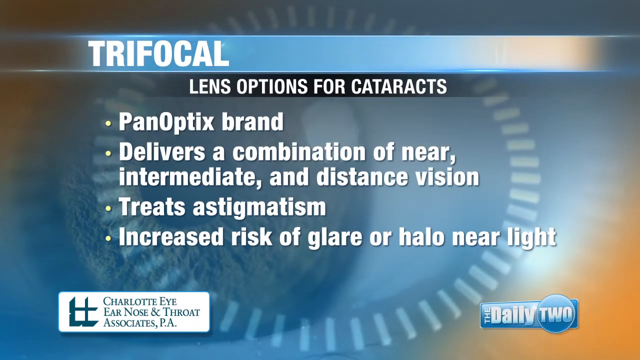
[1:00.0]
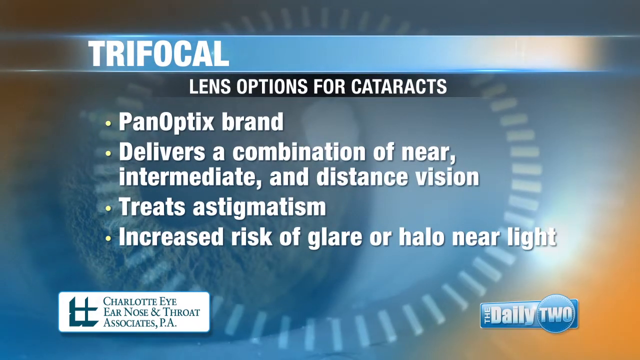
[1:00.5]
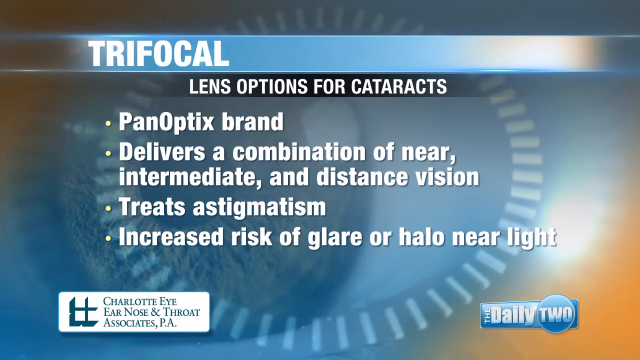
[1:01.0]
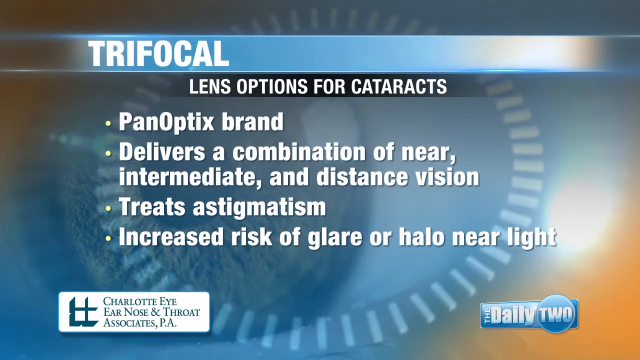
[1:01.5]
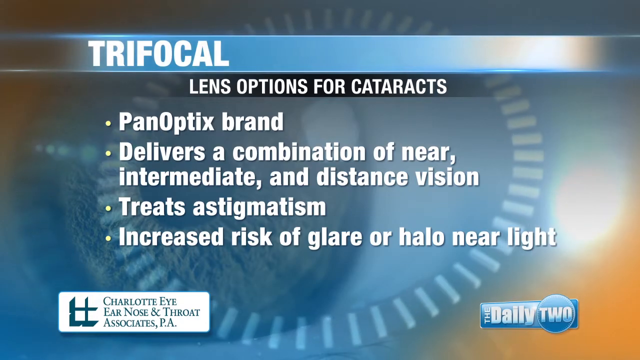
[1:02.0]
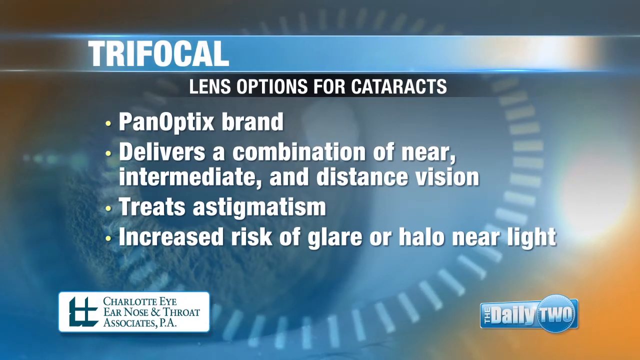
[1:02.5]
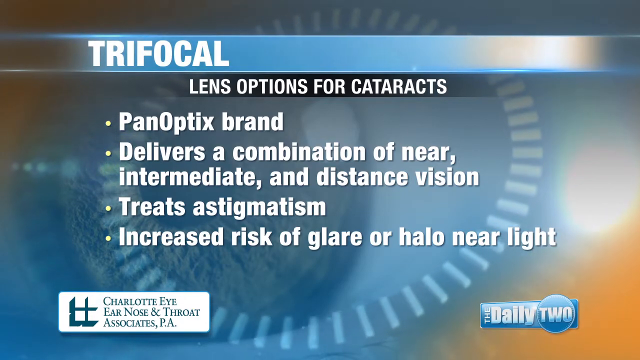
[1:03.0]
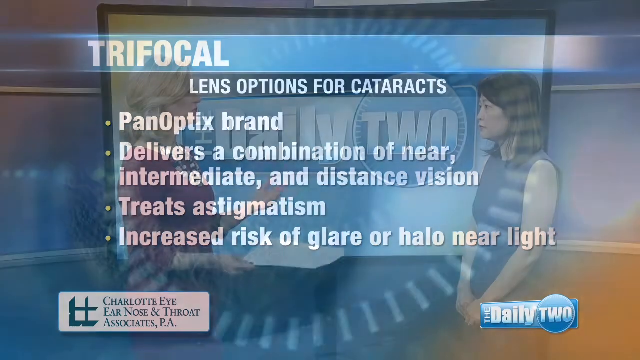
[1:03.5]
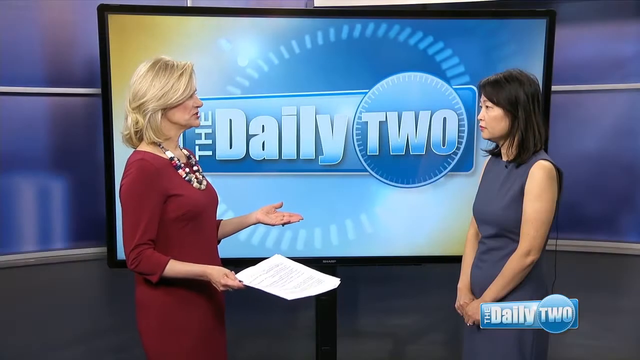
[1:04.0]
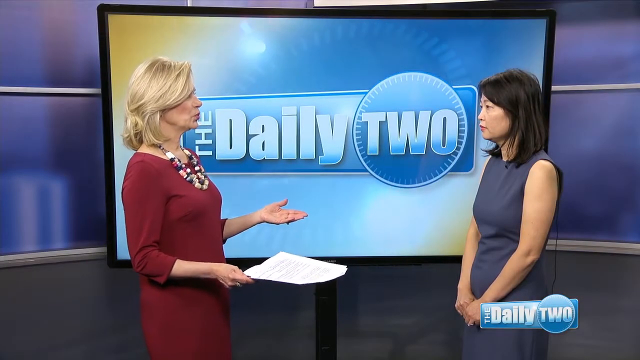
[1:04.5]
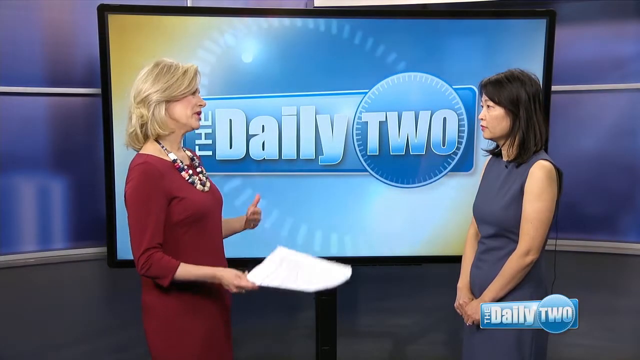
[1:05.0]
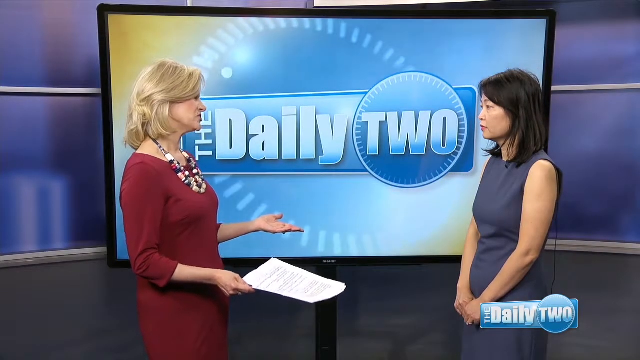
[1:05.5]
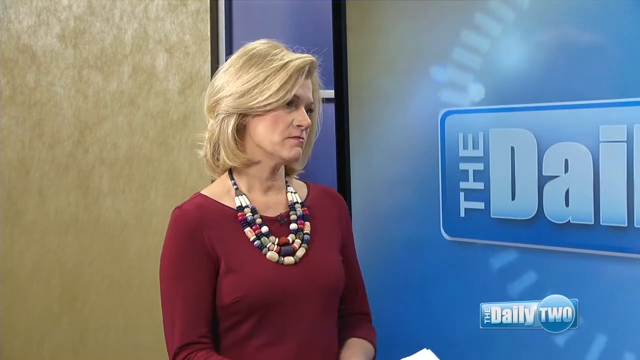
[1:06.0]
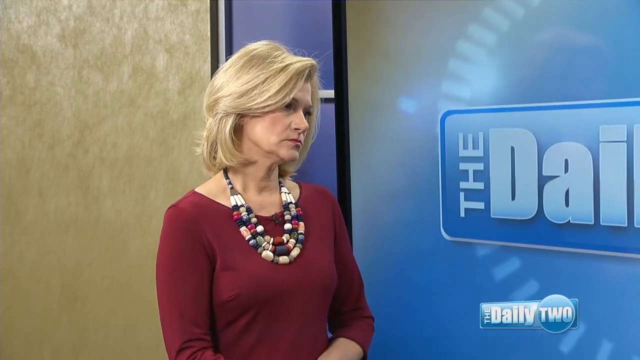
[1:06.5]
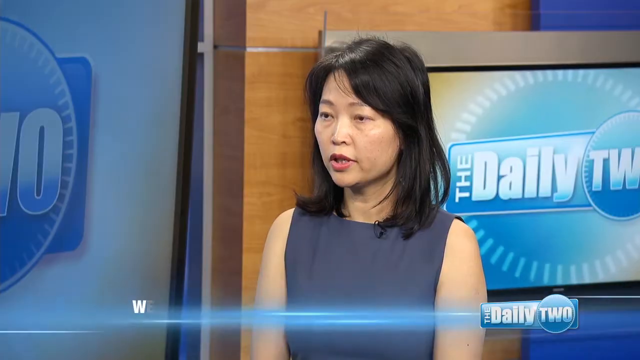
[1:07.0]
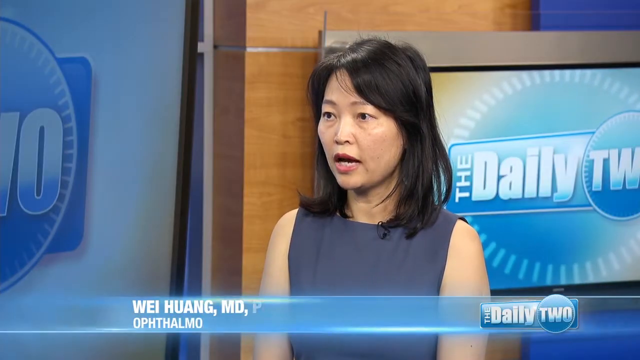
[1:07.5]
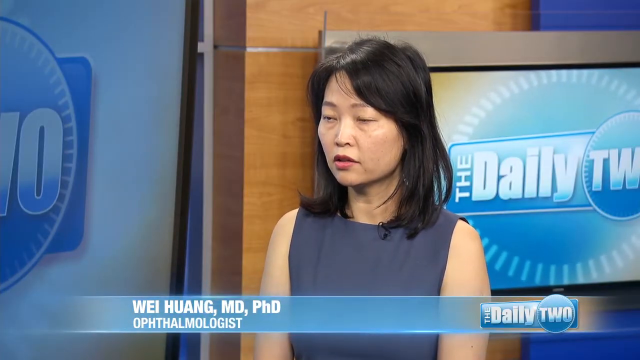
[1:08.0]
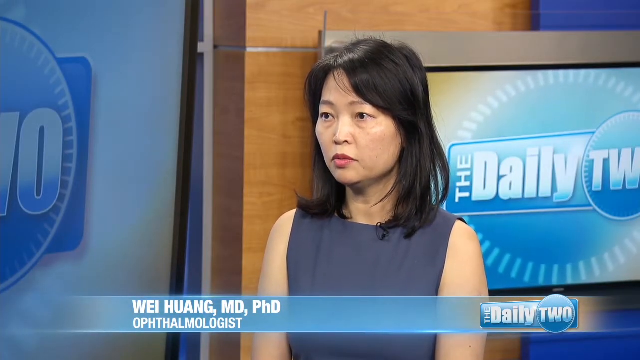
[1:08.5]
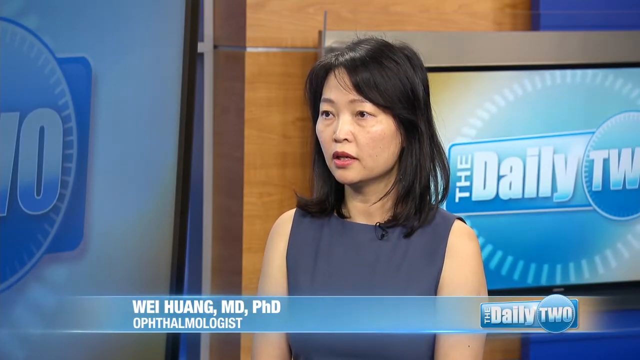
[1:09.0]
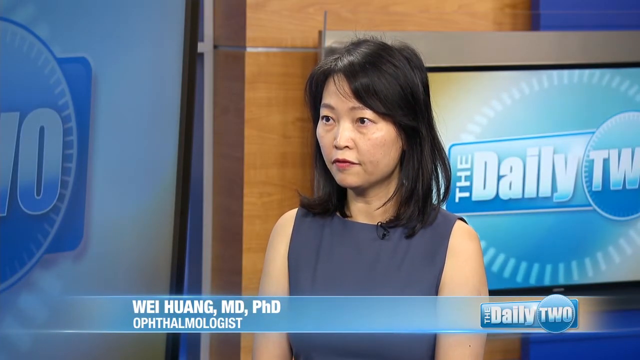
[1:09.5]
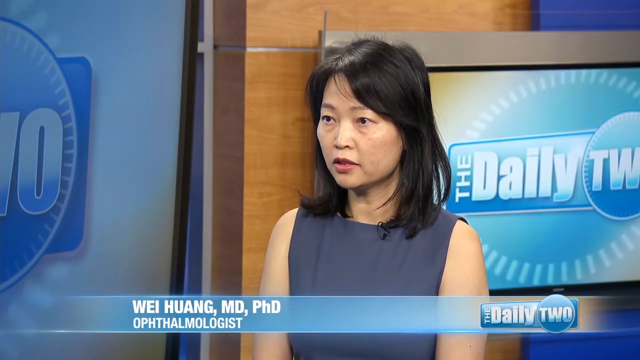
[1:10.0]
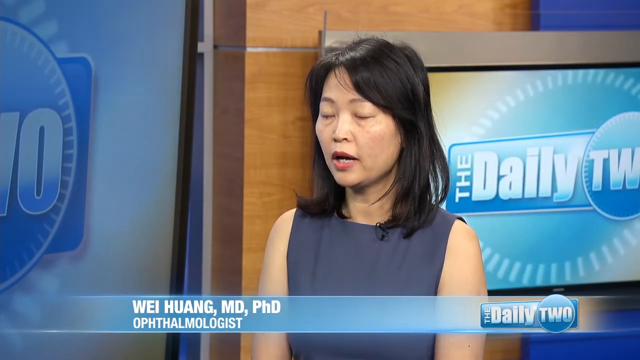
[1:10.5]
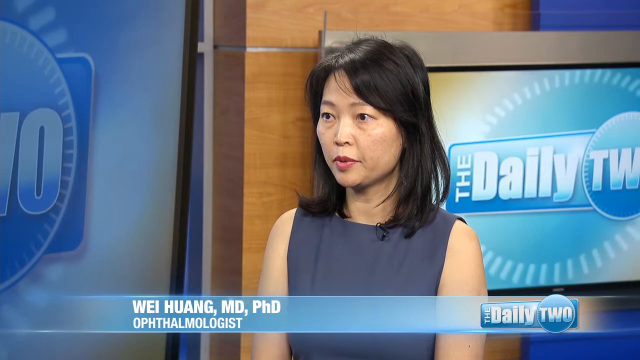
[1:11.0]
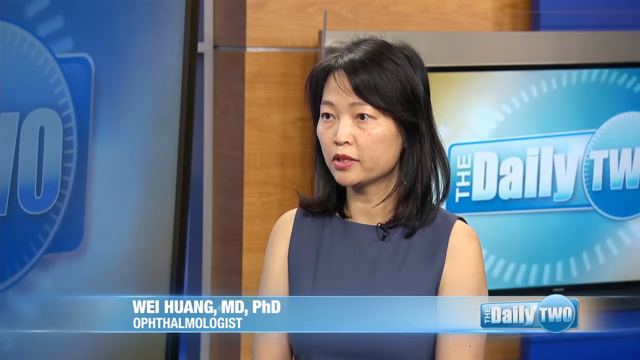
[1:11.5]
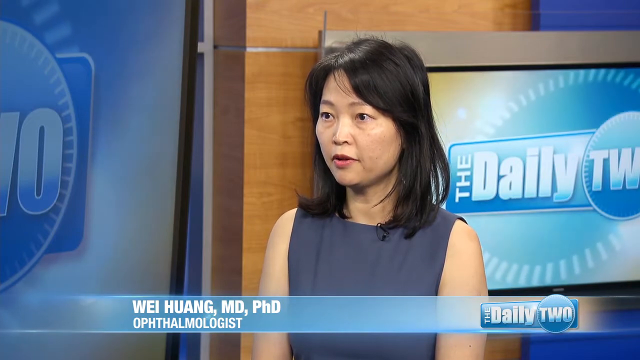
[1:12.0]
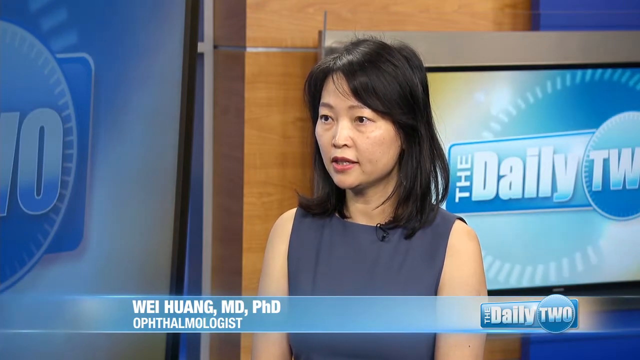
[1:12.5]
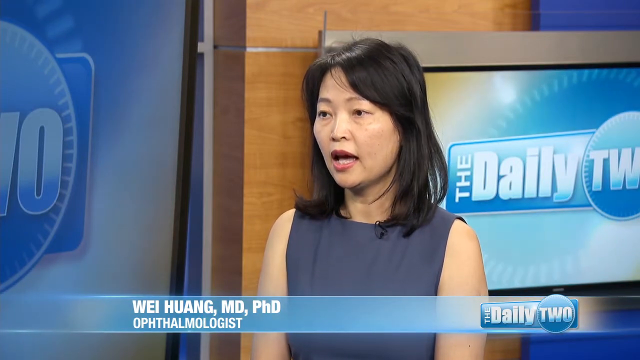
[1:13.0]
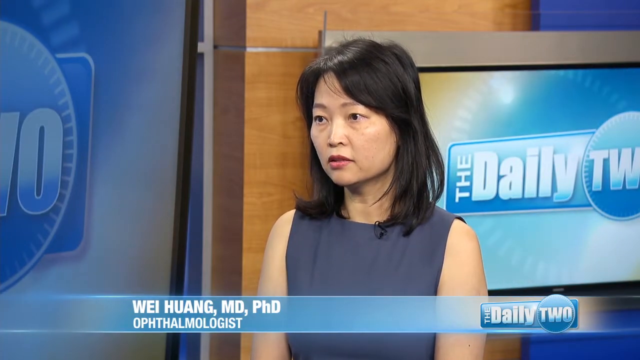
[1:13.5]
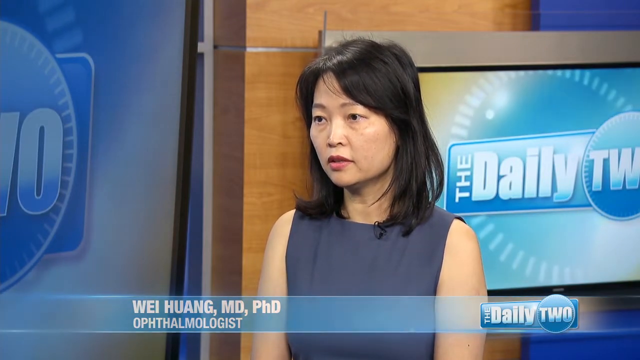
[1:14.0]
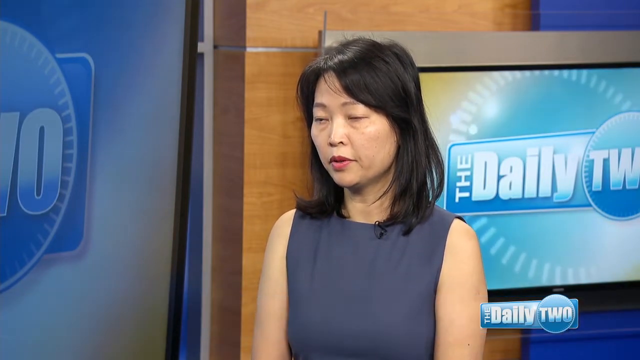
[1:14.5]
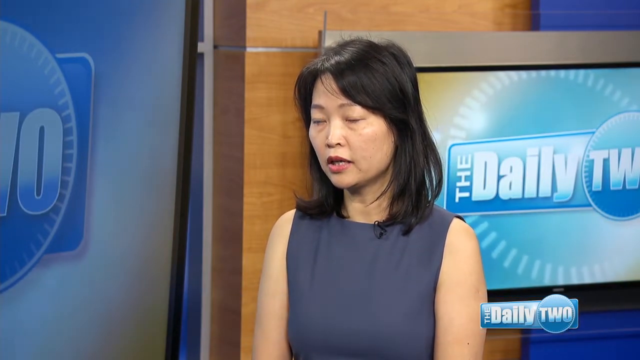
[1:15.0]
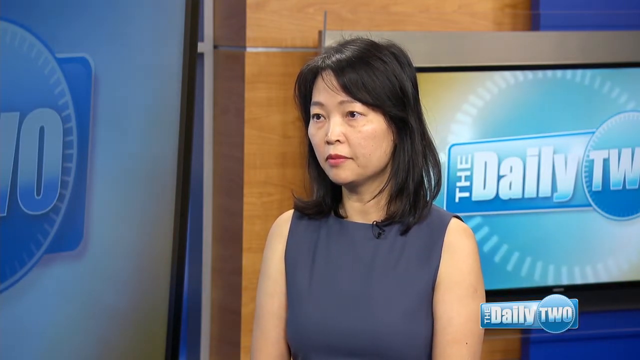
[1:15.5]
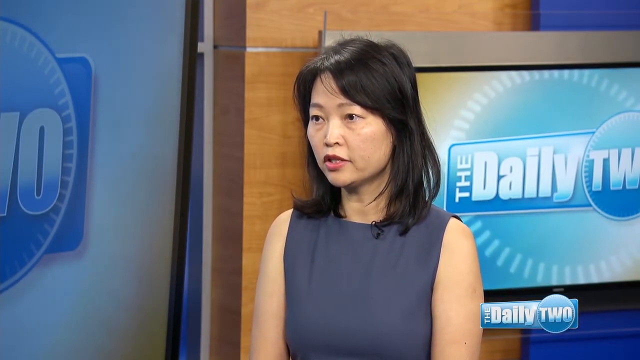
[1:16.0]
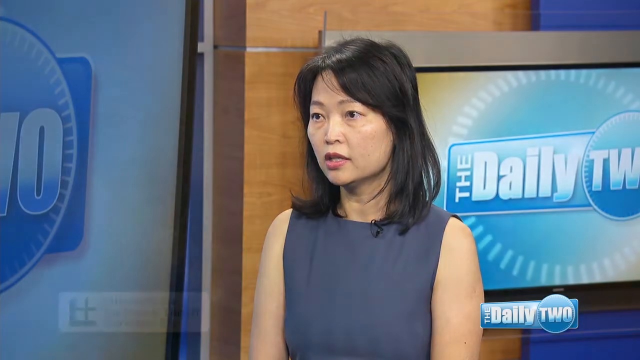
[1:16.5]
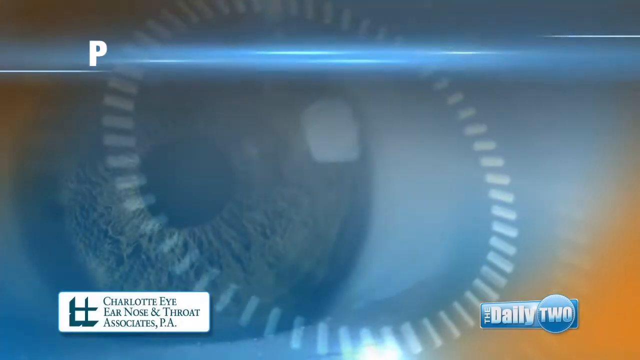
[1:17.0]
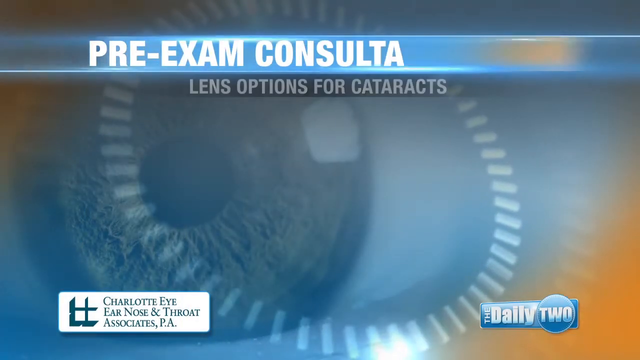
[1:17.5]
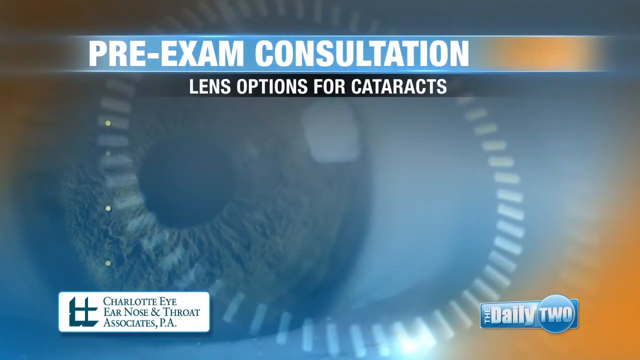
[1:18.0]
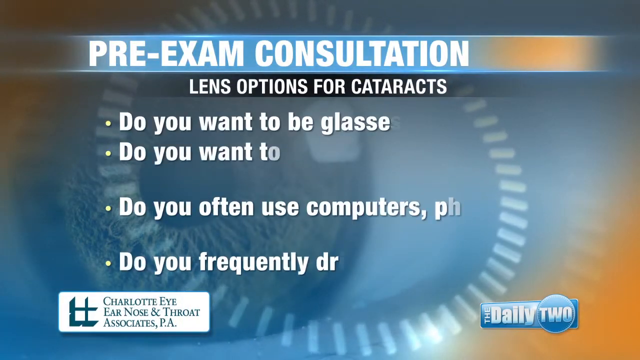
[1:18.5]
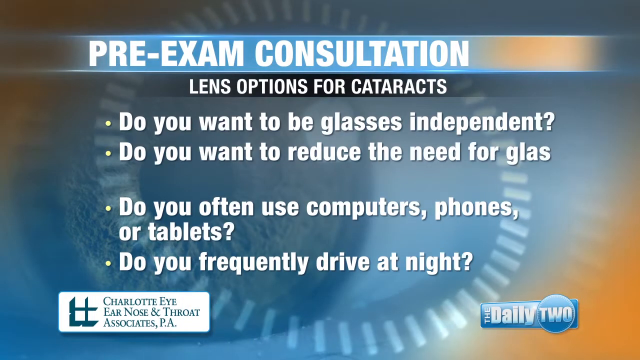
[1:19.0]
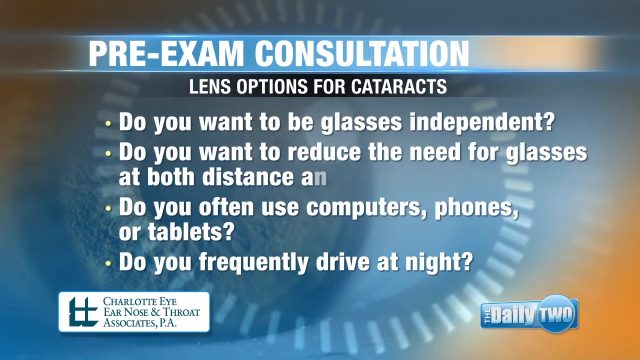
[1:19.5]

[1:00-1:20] The slide reads "trifocal lens options for cataracts", with "Panoptix brand delivers a combination of near-intermediate and distance vision", "treats astigmatism", and "increase risk of glare or halo near light". Then the two women are shown talking again. The woman in the sleeveless gray dress is labeled "Wer Huang, MD, PhD" with "ophthalmologist" underneath her name. Her mouth moves as she talks; she has shoulder-length black hair, and a mic is clipped at the top of her dress. Text then reads "pre-examination consultation", "lens option for cataracts", "Do you want to be glasses independent?" and "Do you want to reduce the need for glasses?"